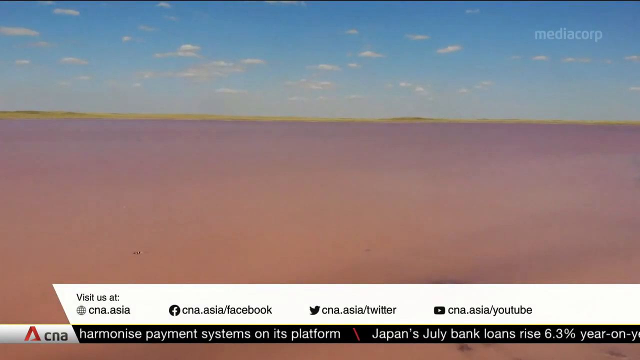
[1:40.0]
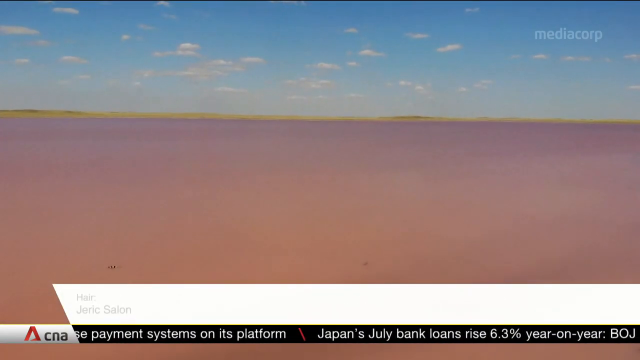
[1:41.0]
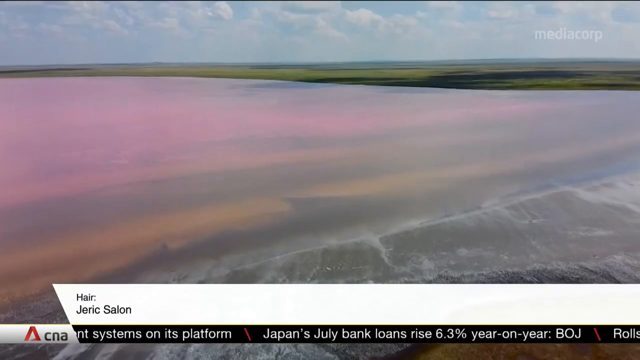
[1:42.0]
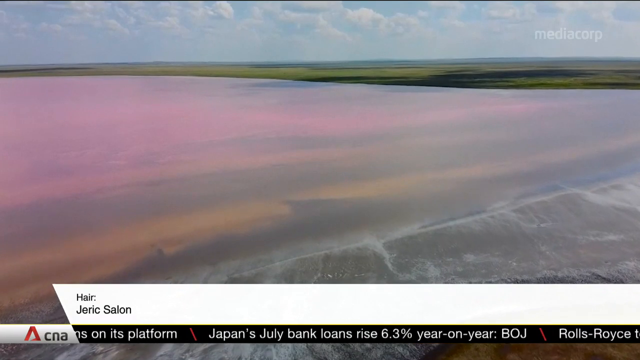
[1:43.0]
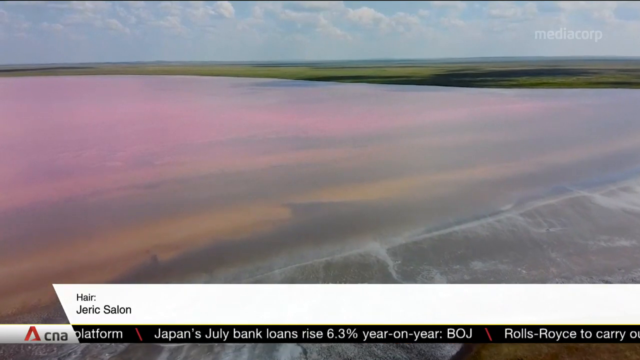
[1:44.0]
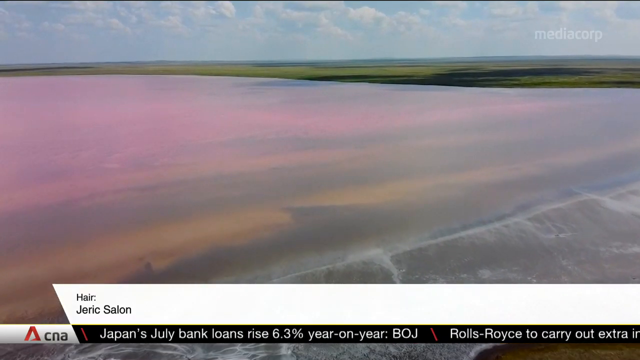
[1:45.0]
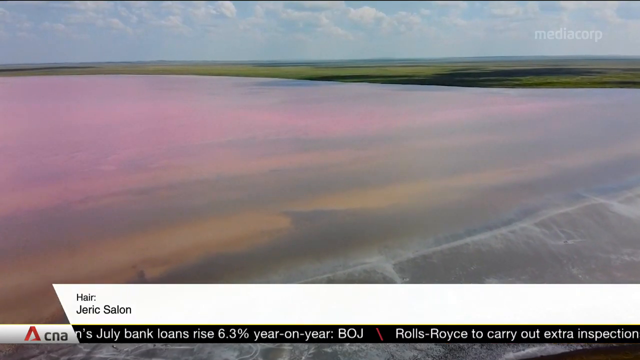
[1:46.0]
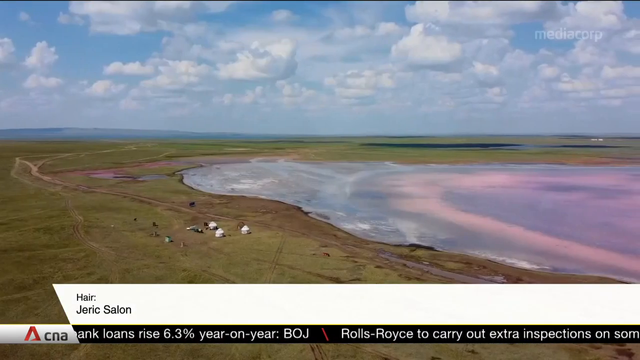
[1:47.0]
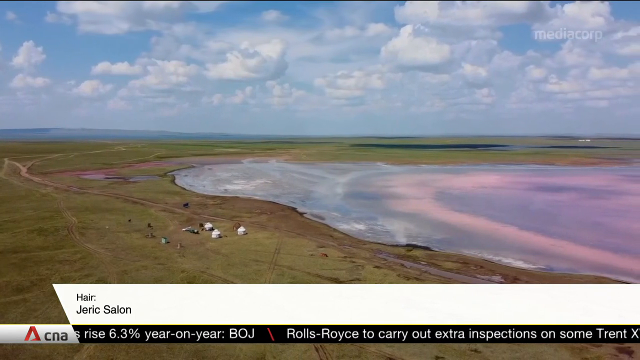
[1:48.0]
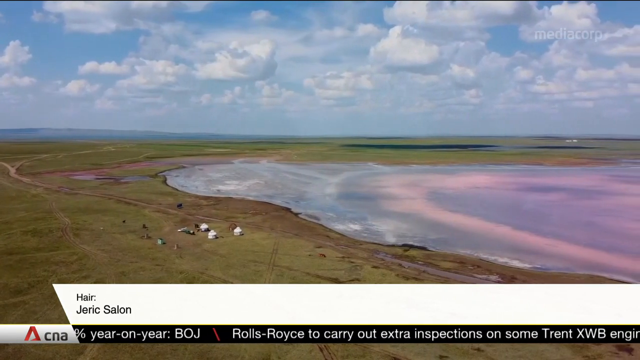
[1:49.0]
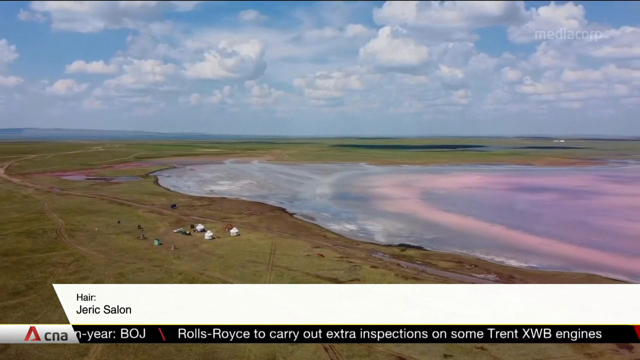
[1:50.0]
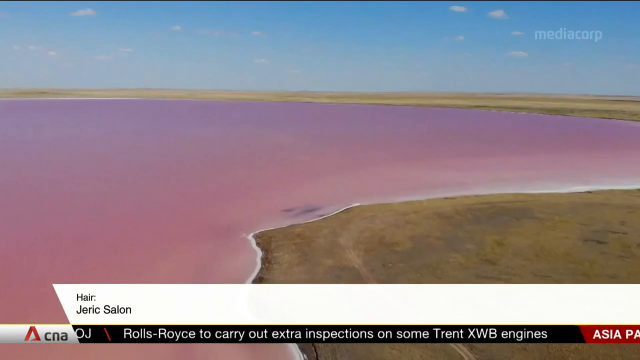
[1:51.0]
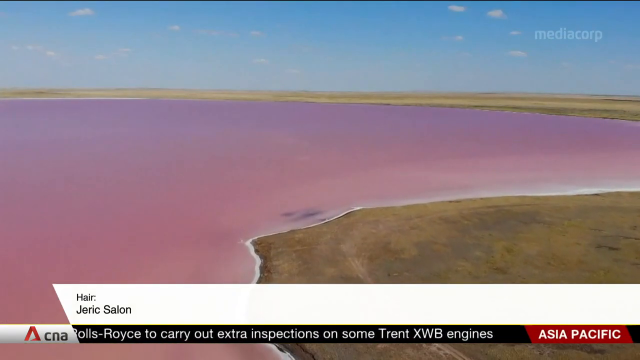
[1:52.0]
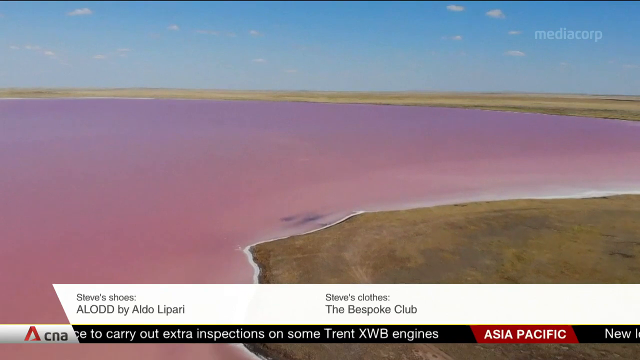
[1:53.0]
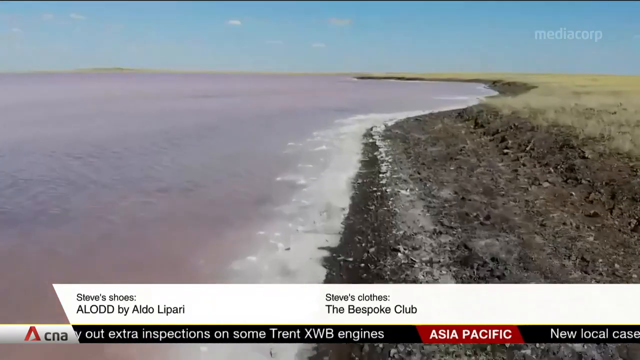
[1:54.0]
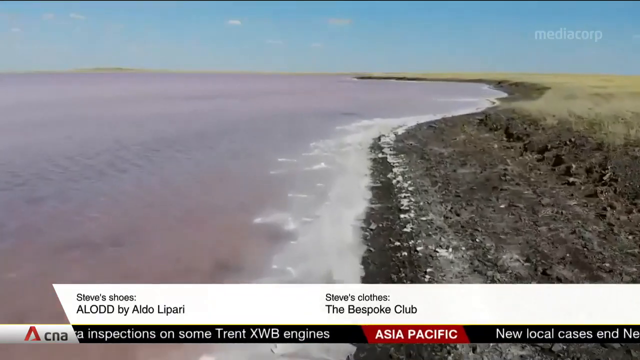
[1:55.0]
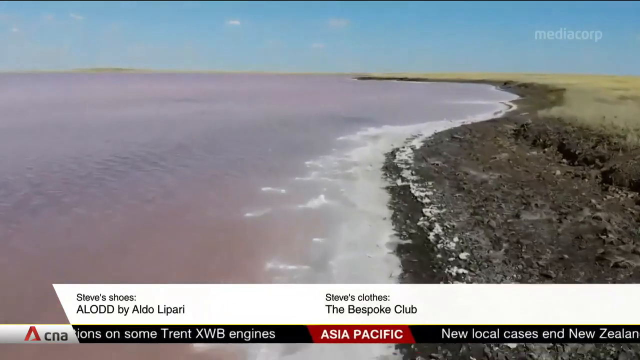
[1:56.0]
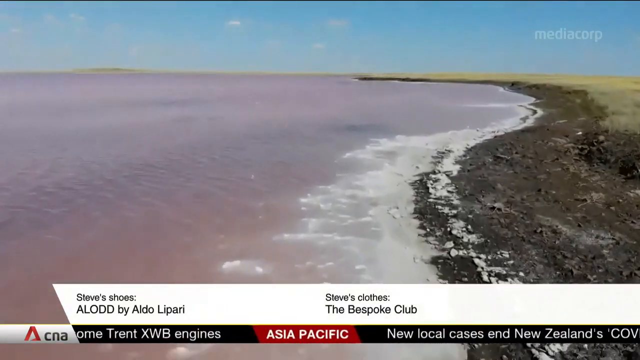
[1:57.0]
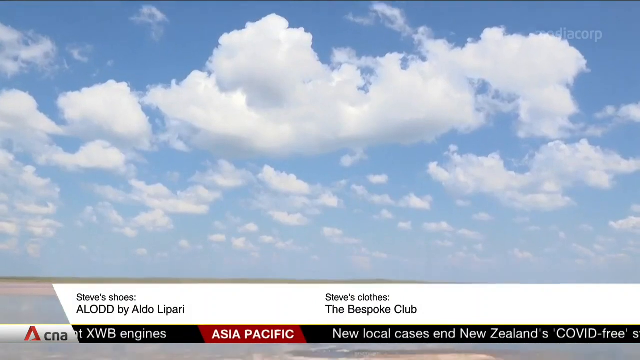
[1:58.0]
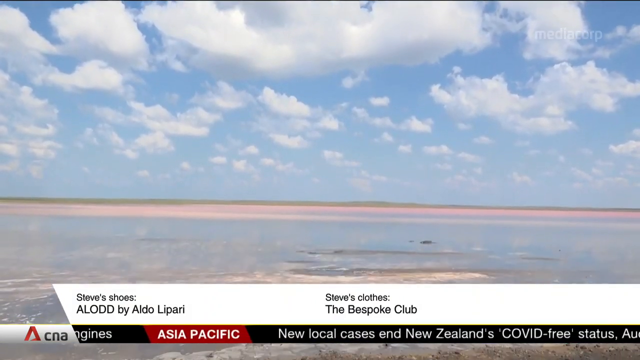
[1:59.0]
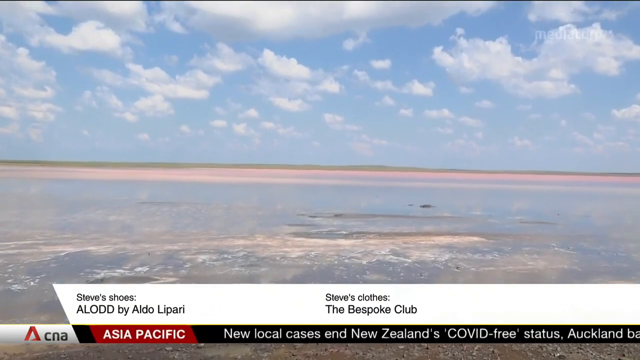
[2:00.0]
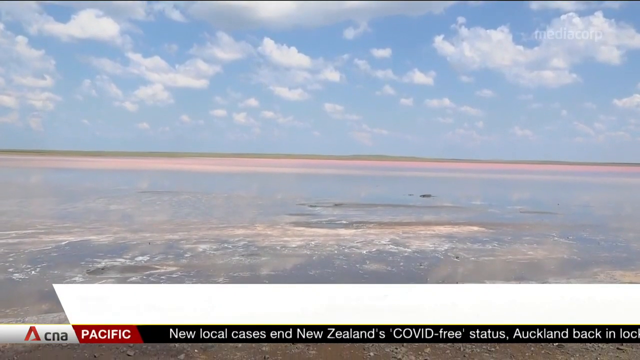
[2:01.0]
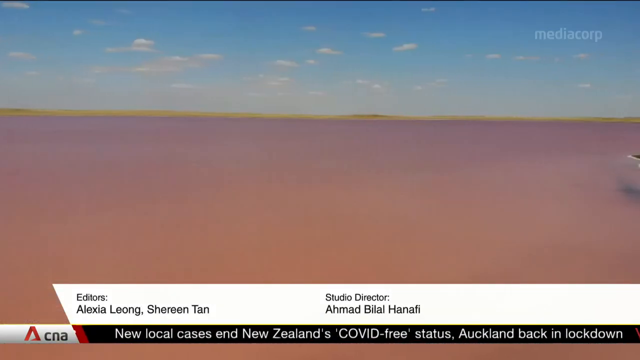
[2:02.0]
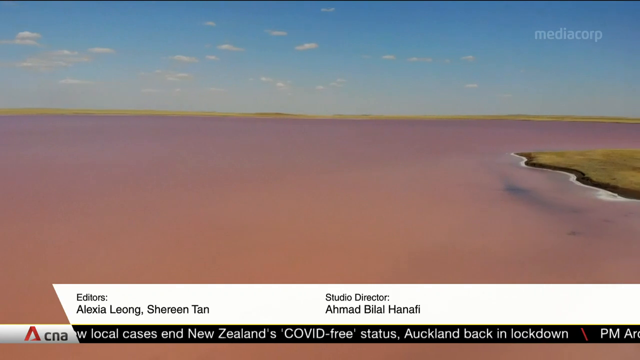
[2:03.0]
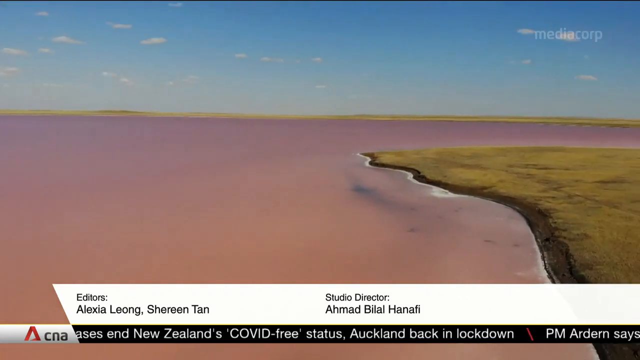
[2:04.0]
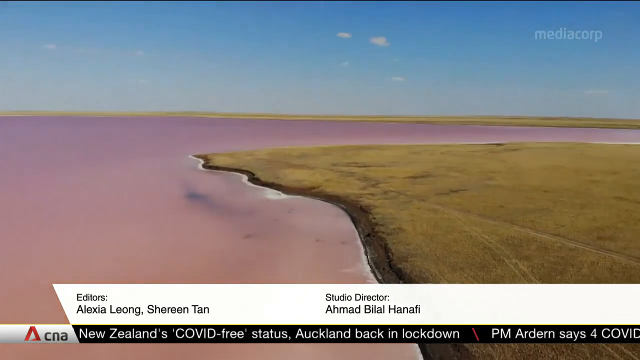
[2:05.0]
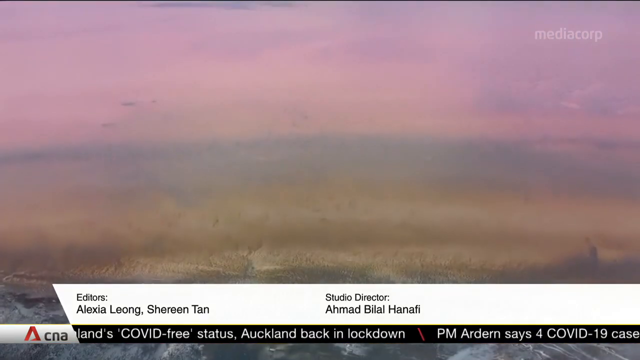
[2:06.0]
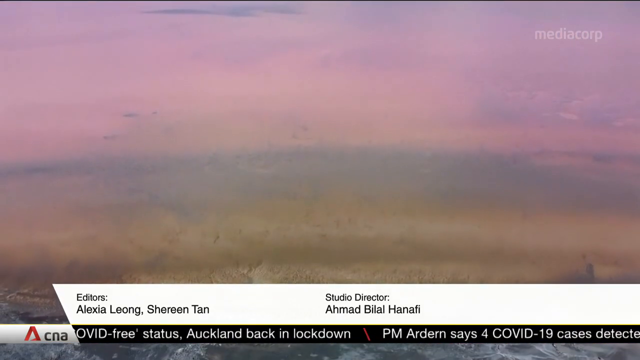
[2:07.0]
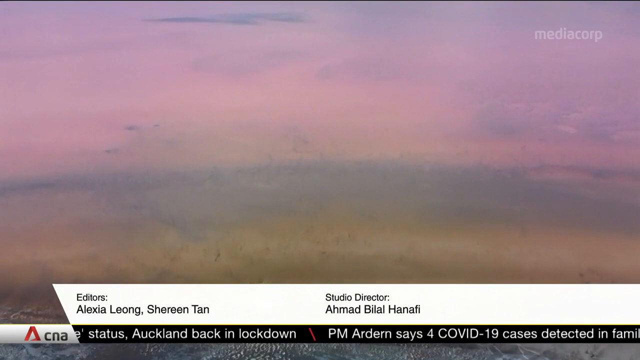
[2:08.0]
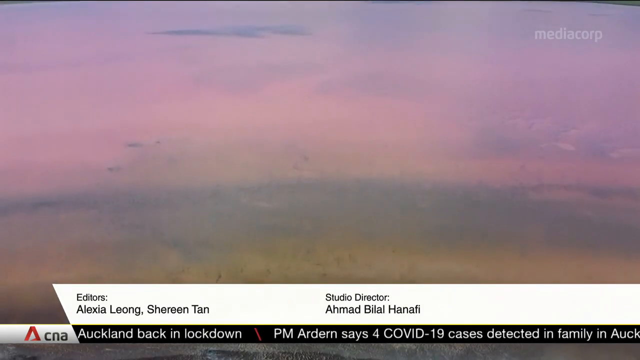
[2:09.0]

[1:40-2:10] The white banner across the bottom of the screen reads "Hair Jerrick Salon", and the black banner below it continues to scroll. More aerial drone views of the lake follow from different views: from the shore, a spinning 360 view, an aerial view from a plane, and a larger drone view over the entire lake, alternating shots of the pink lake as the news segment ends. The Mediacorp logo and semi-transparent text are at the top right of the screen.